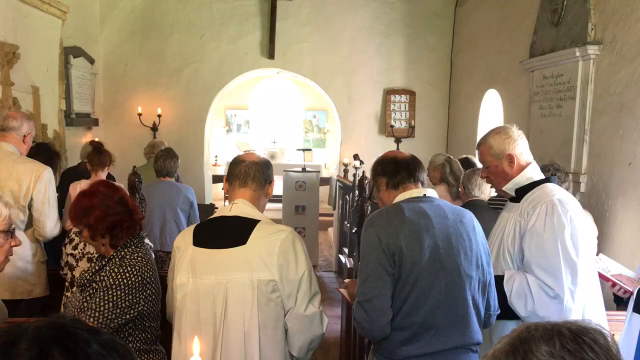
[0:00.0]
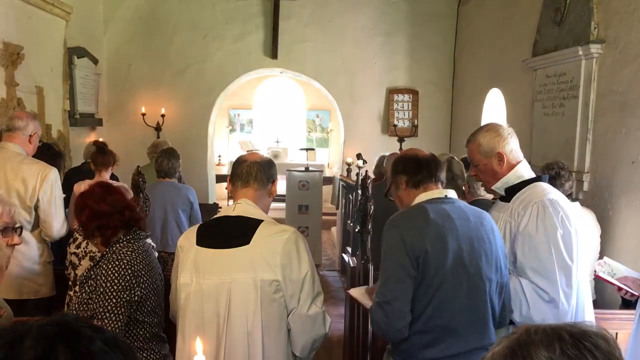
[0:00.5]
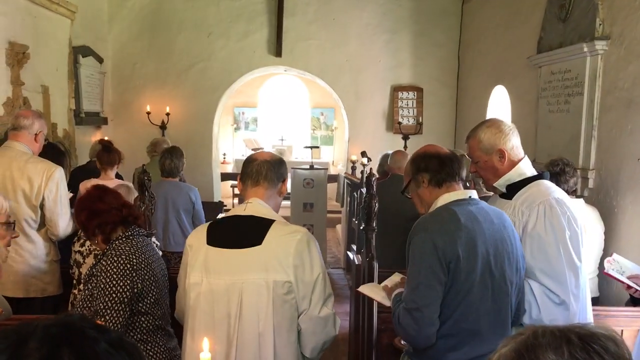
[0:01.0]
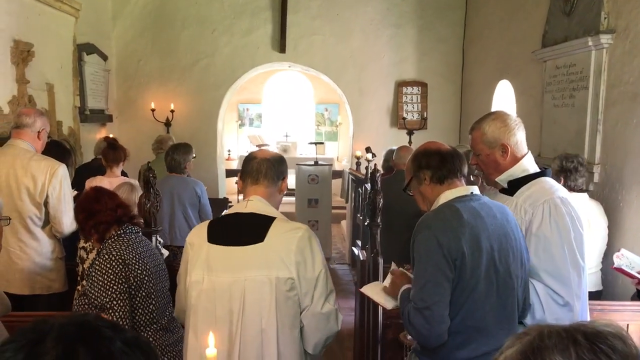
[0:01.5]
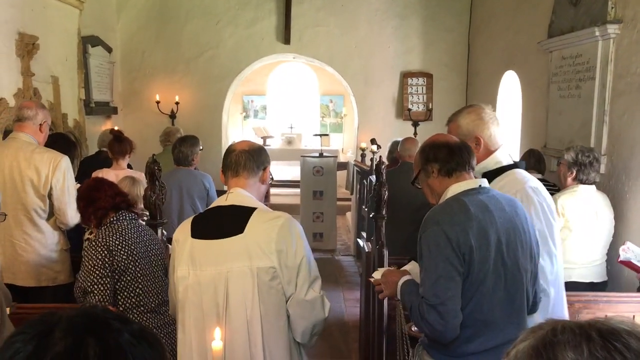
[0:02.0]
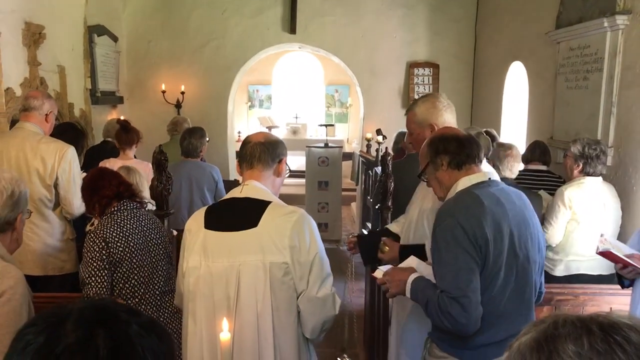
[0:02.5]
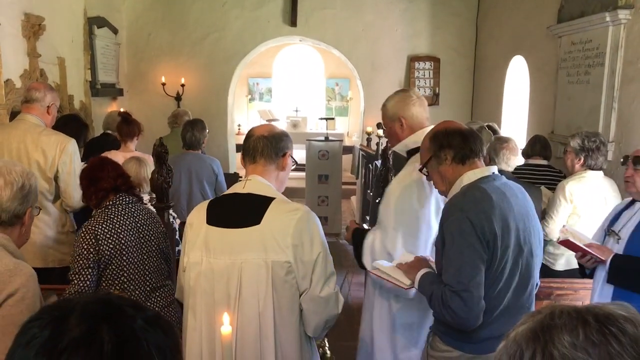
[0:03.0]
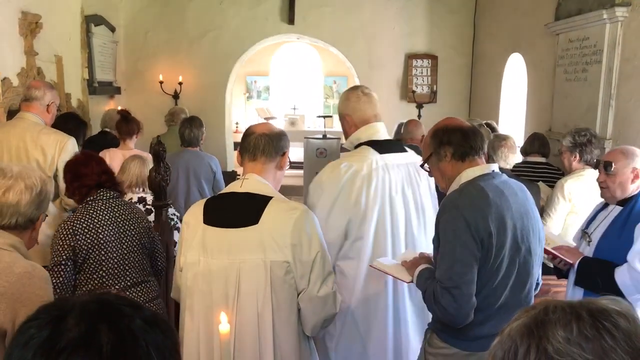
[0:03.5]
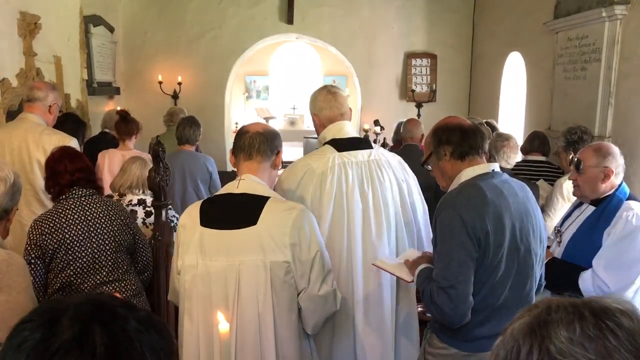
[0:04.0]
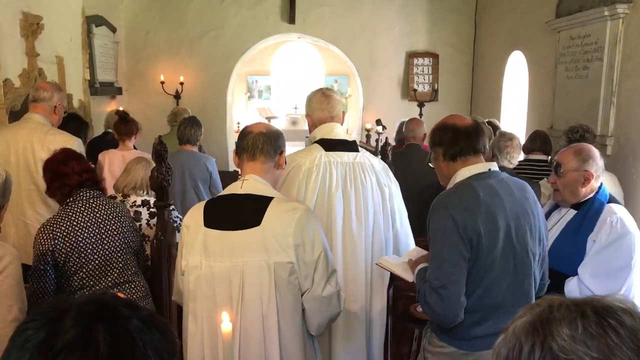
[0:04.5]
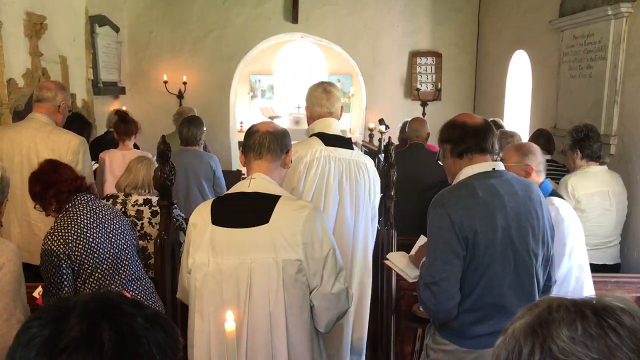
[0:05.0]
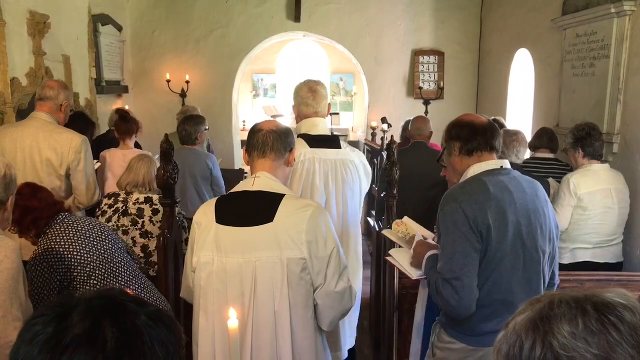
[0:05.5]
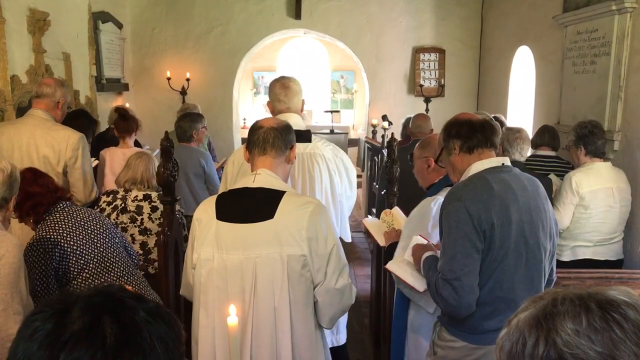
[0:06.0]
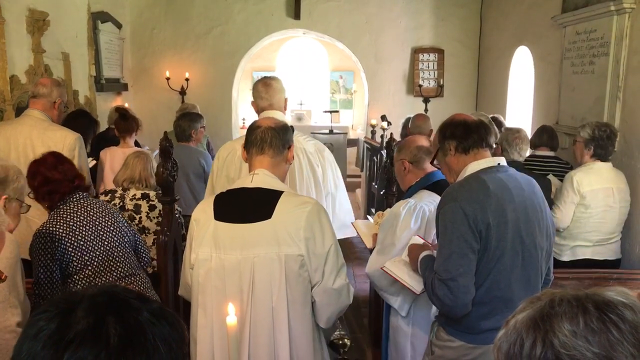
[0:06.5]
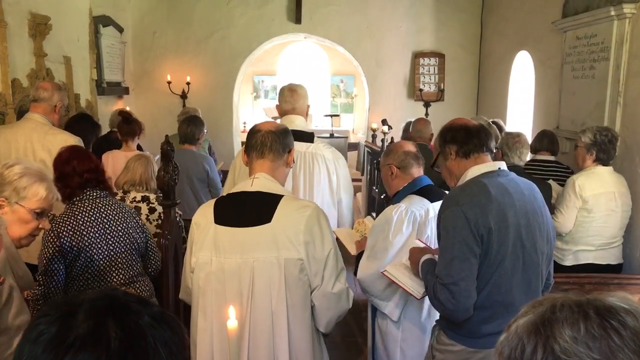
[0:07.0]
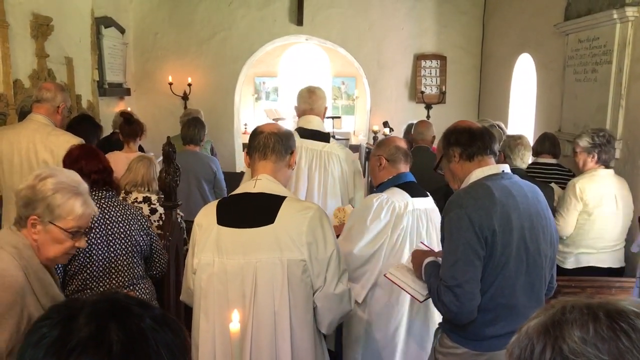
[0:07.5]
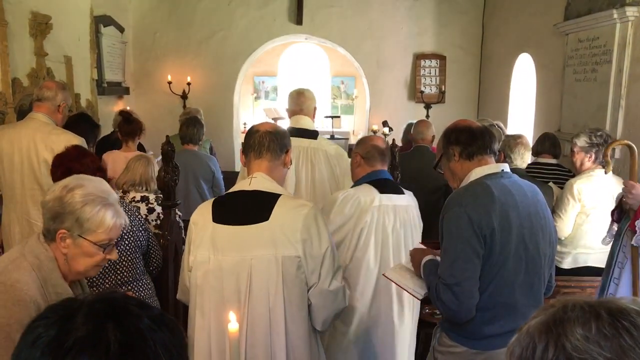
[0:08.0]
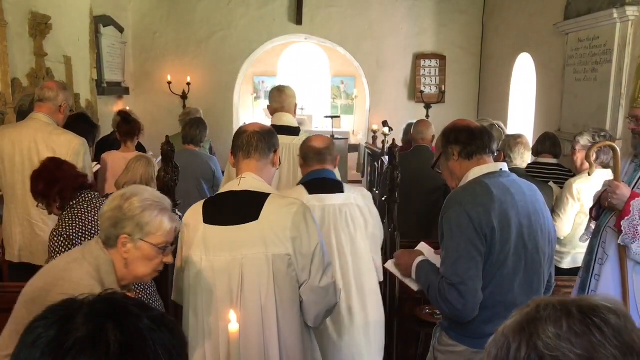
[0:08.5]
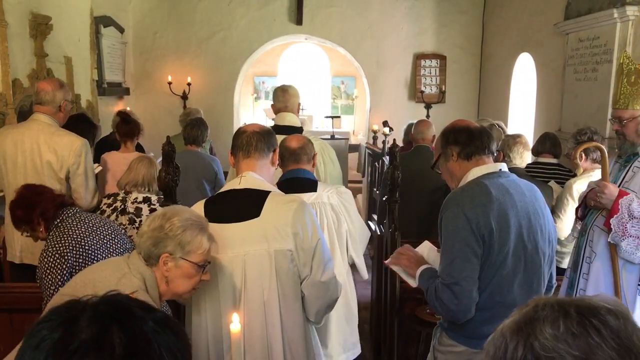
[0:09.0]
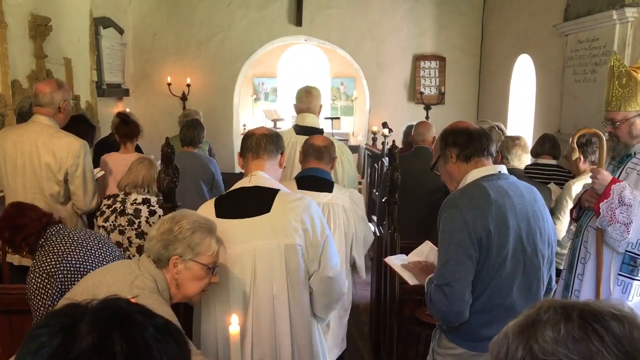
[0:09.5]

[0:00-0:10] Members of a church congregation are standing by some pews, apparently awaiting a service inside the church. Four men in ceremonial church robes then come into the church and start walking down the aisle towards the front. The building appears to be quite small. The congregation is a mix of women and men of all different ages, though mostly they seem to be of the older generation, and they are all facing away from the camera. The walls of the church are an off-white colour and look to be made of stone.